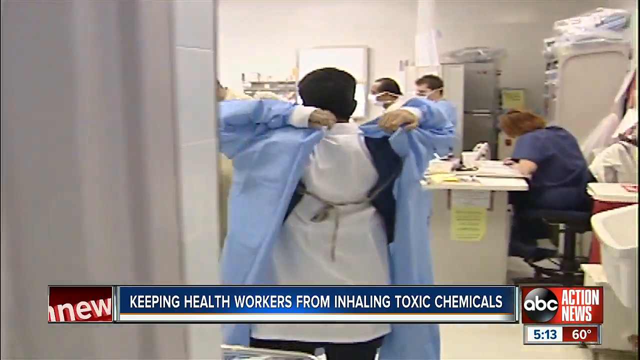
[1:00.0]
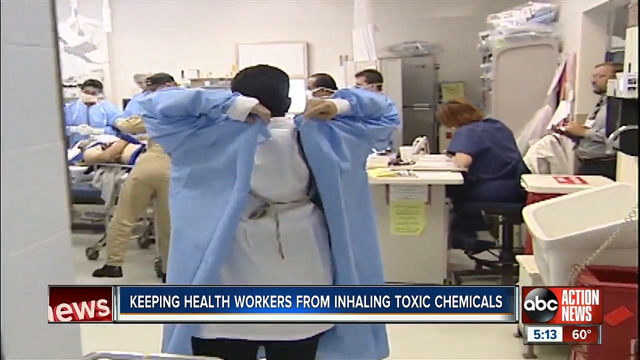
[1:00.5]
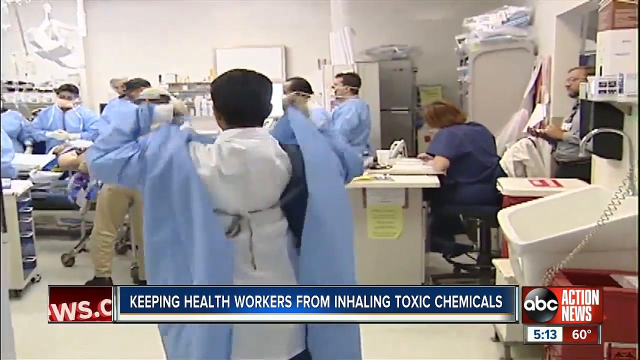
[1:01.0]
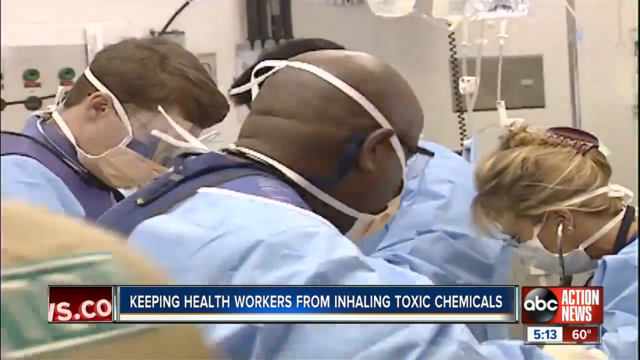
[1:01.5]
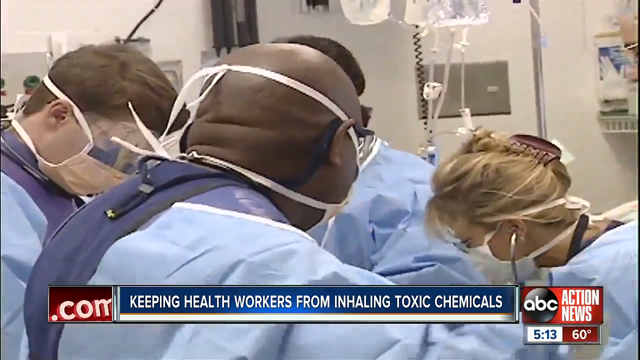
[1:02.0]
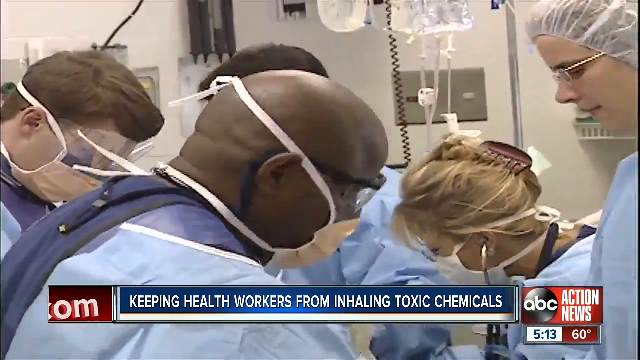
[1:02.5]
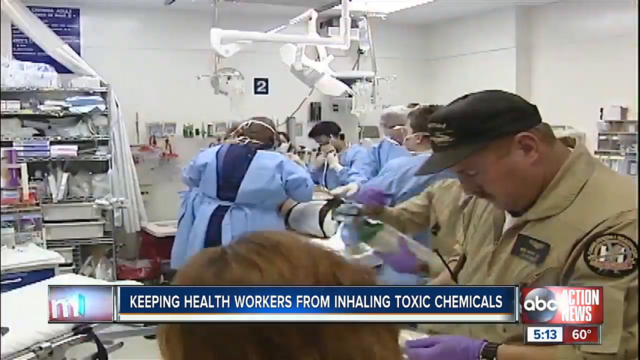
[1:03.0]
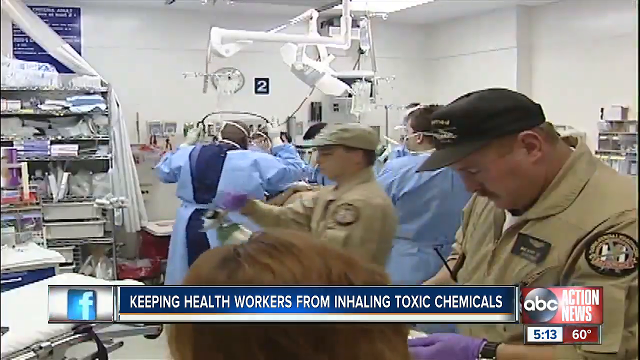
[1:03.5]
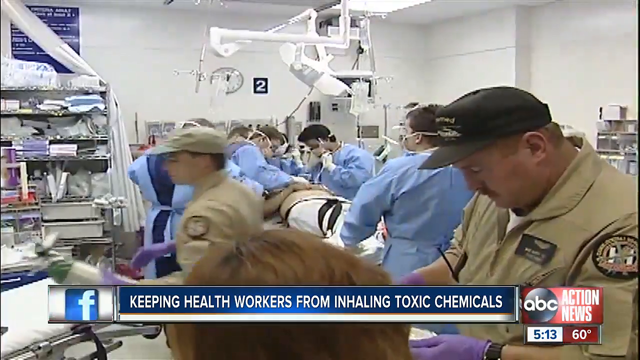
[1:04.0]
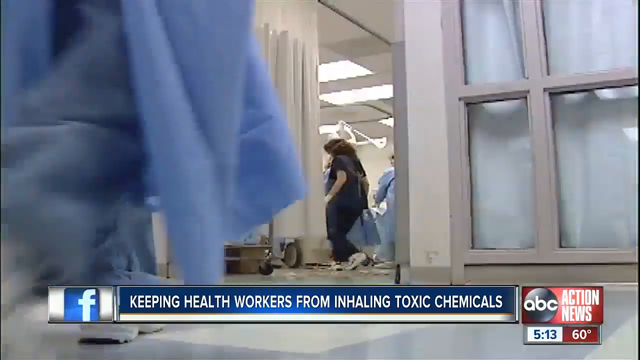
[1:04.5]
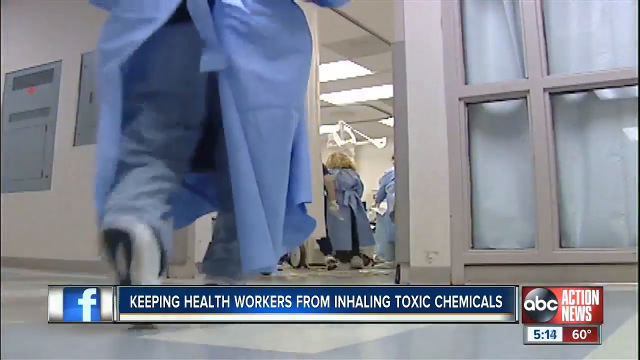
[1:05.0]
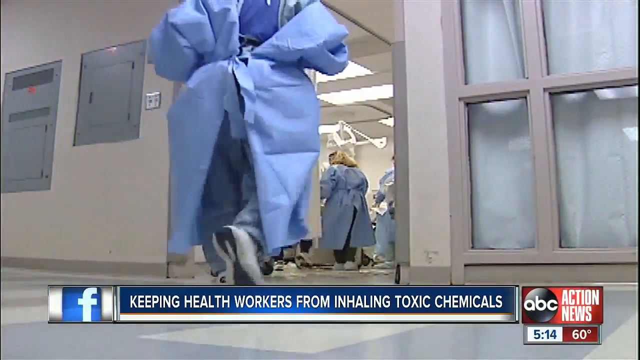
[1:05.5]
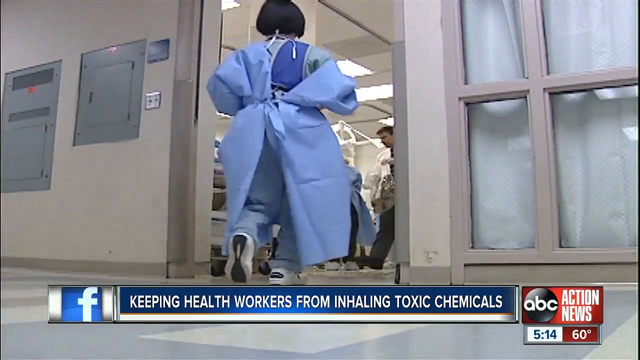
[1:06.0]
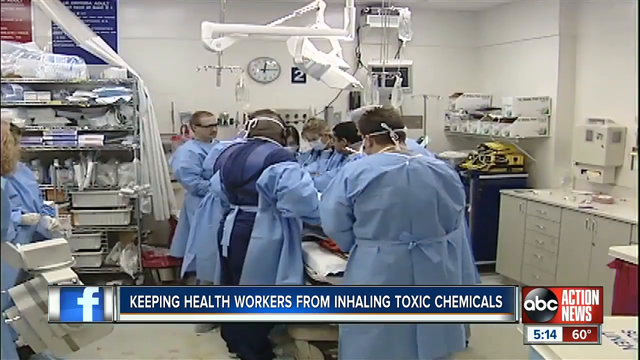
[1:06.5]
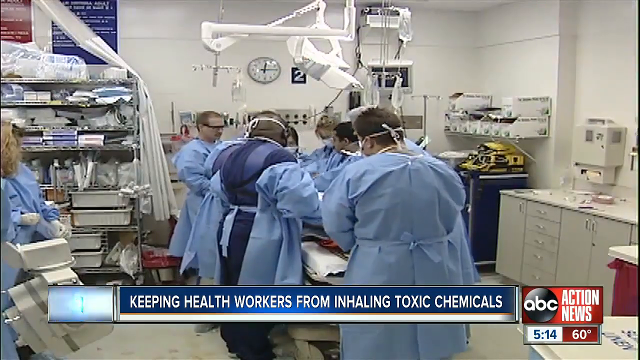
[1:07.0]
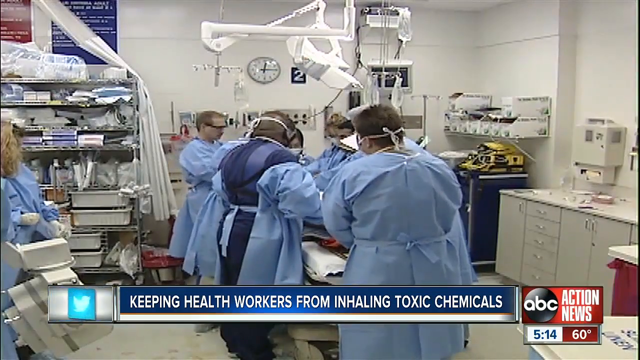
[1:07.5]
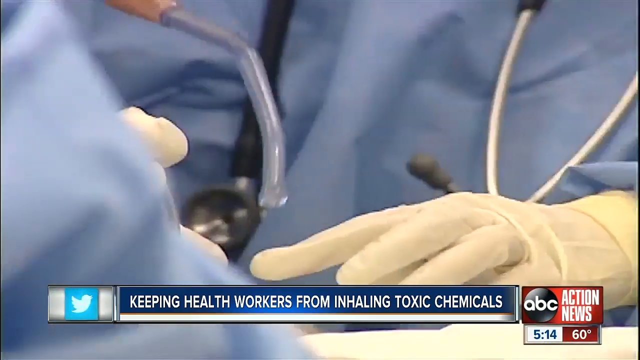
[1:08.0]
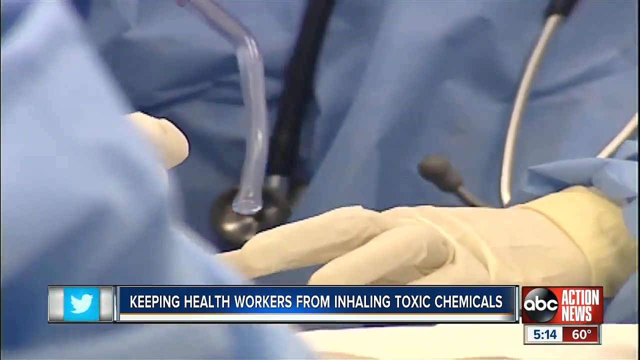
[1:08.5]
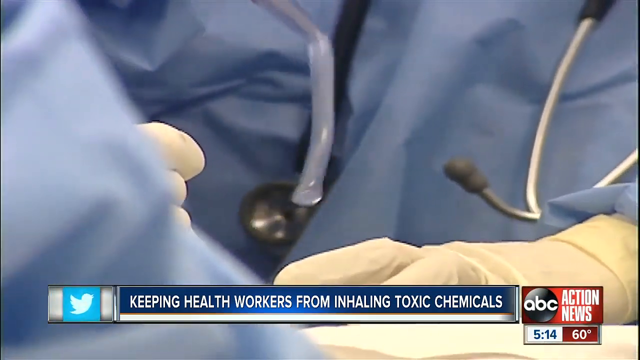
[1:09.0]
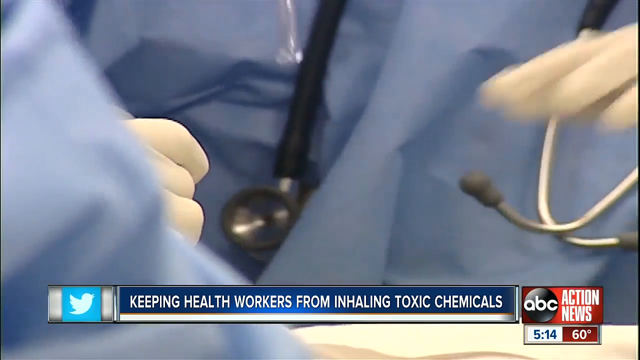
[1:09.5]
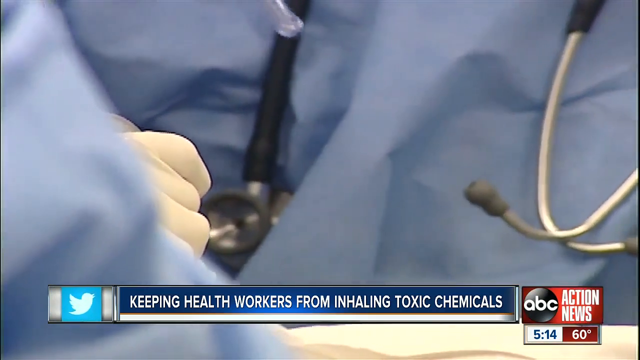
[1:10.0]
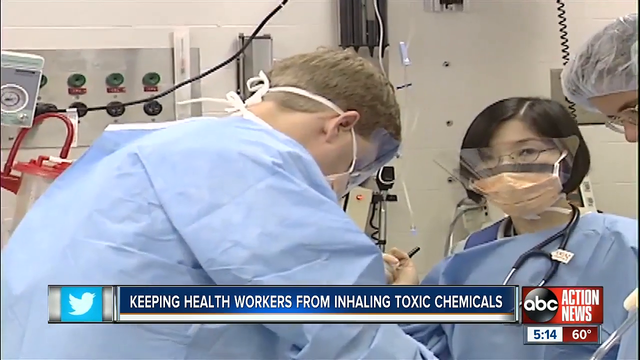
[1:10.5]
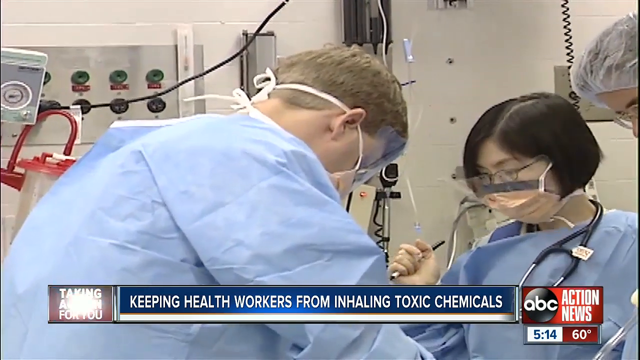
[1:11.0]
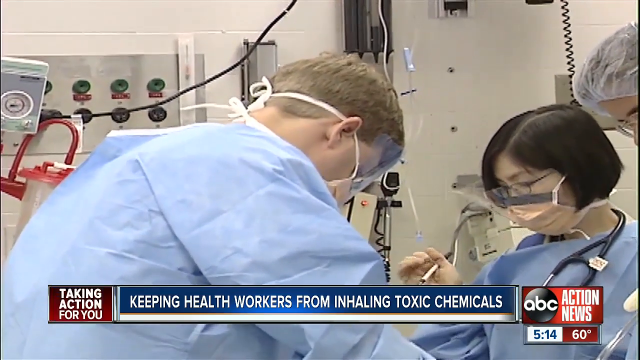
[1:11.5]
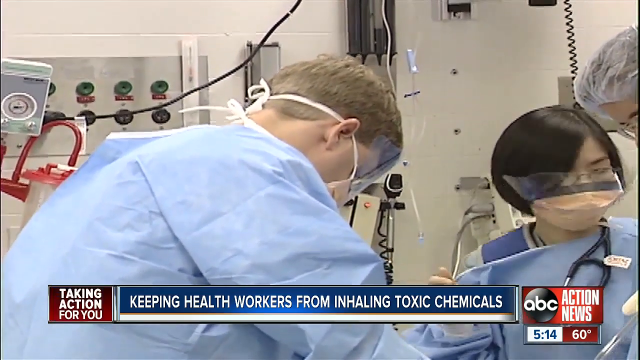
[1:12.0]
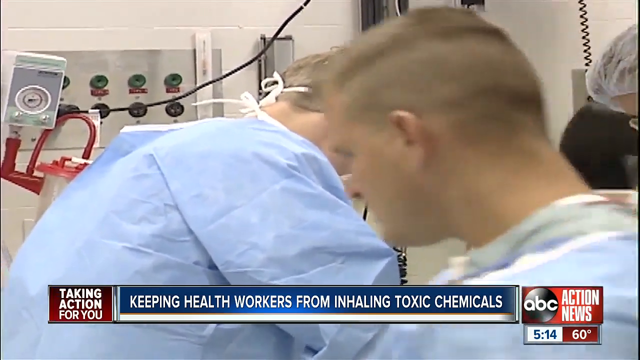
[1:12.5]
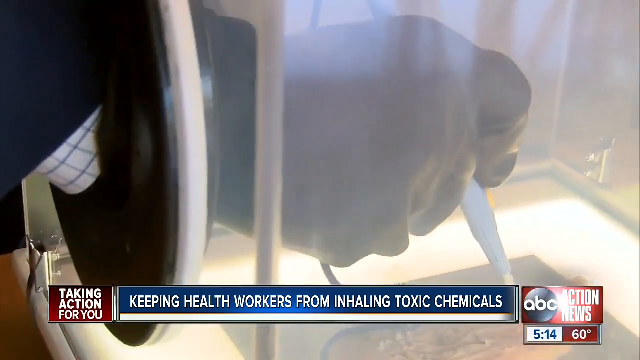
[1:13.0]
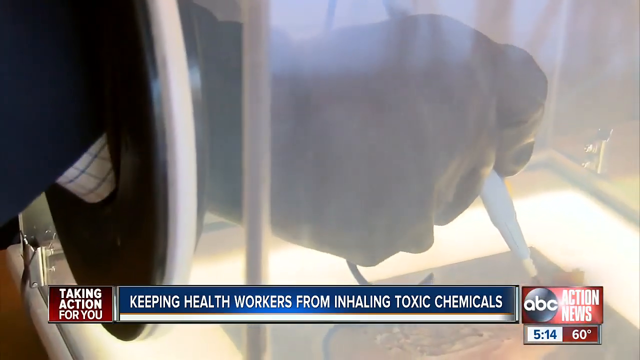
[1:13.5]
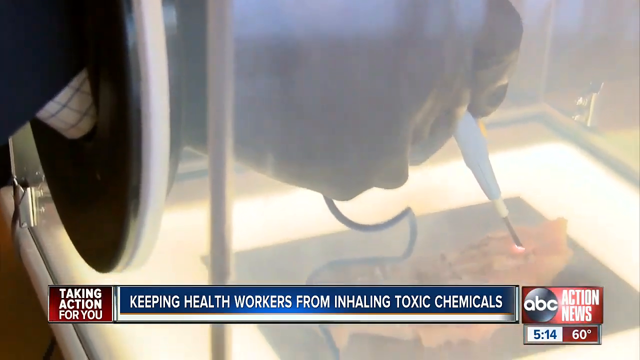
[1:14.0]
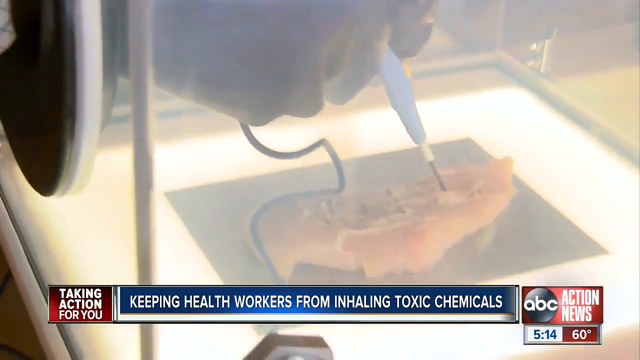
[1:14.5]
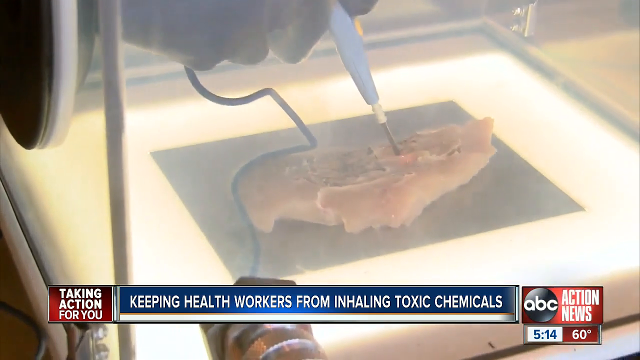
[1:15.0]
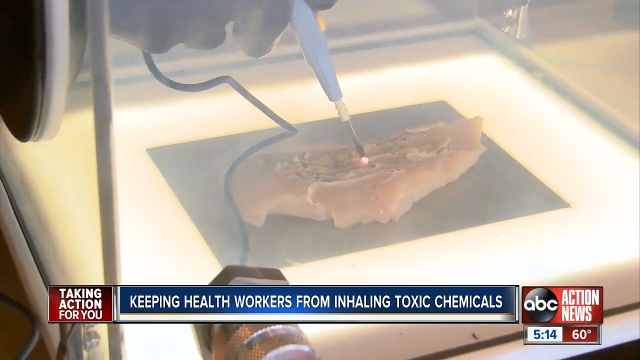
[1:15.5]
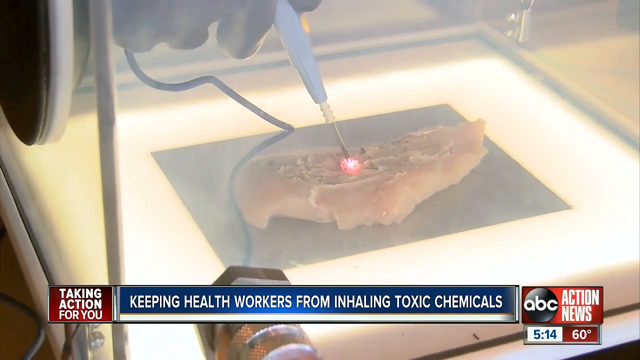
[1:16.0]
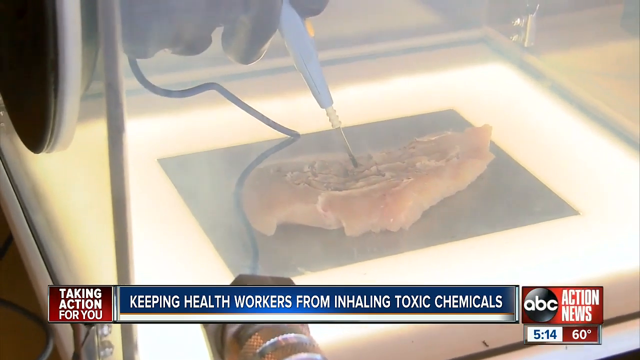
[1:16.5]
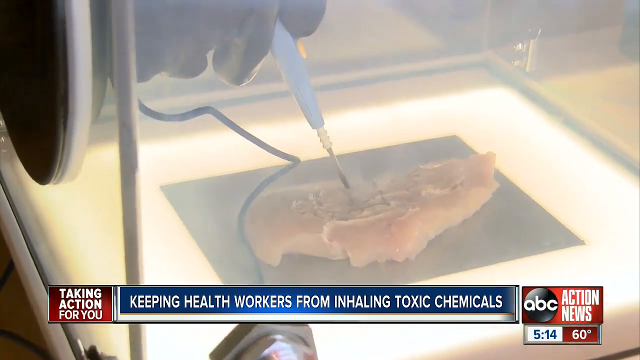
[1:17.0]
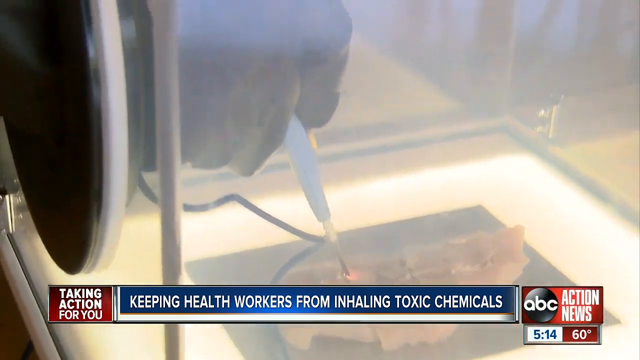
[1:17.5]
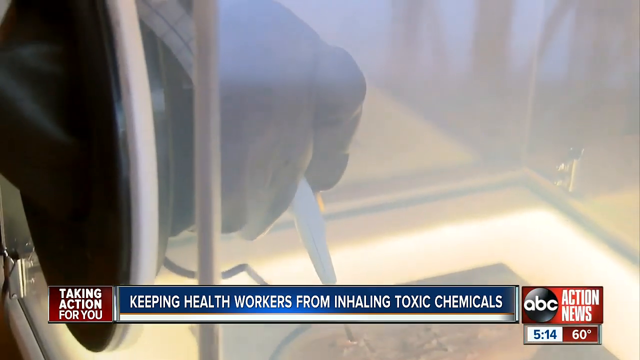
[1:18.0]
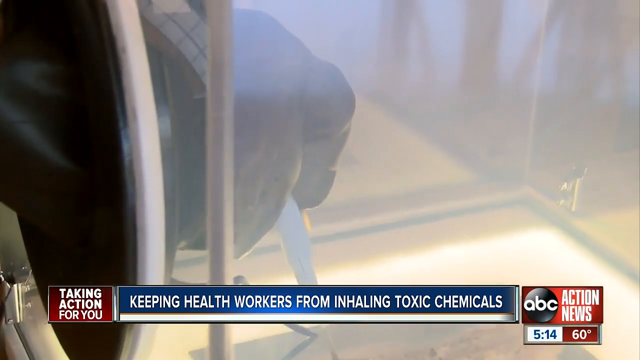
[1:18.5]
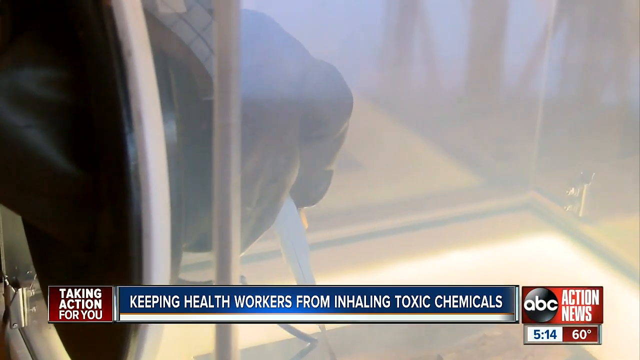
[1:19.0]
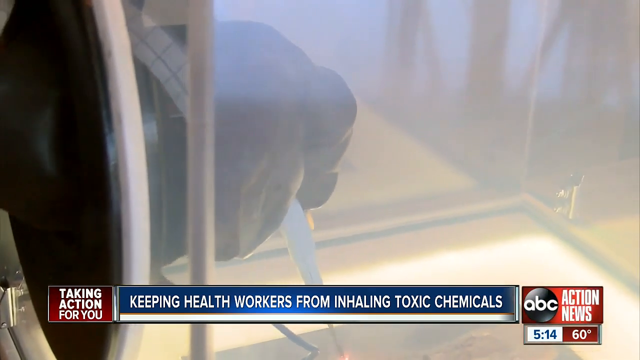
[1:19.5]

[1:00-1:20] Many nurses and doctors in blue gowns and different face masks attend to patients. Security guards wear khaki uniforms. Nurses and doctors are inside an operating room as they attempt to operate on a person, and a female Chinese nurse helps at the table. The video returns to the man testing at the small table, using a needle on a piece of meat or tissue with a gloved hand. The setting is an office with brown tables and chairs in the back, and the man, wearing a dark suit, talks facing the camera. Inside the hospital, doctors with stethoscopes and gloved hands continue operating on people.